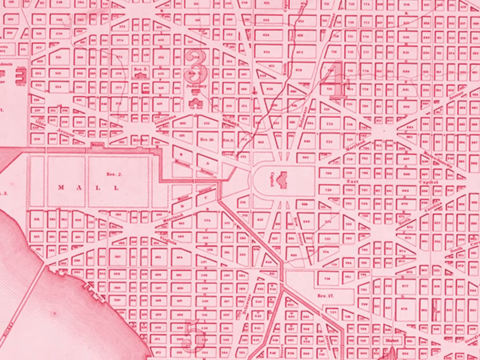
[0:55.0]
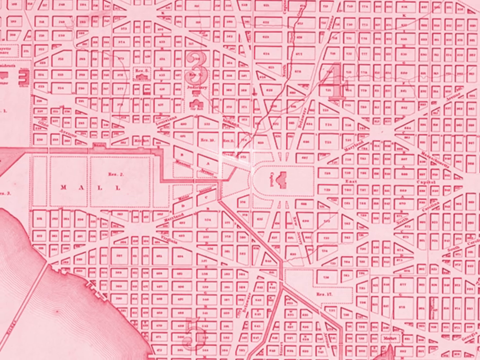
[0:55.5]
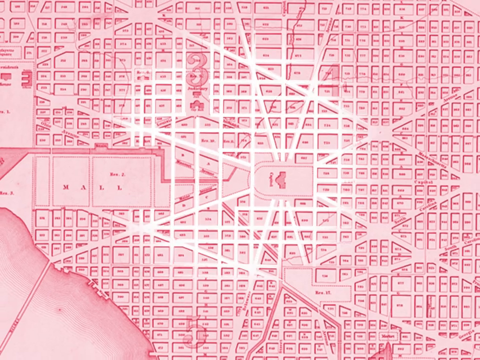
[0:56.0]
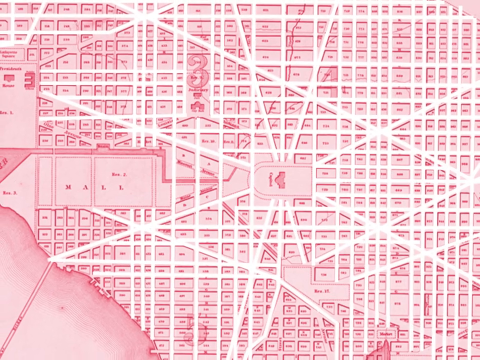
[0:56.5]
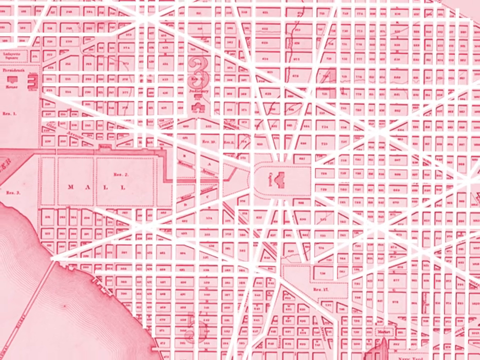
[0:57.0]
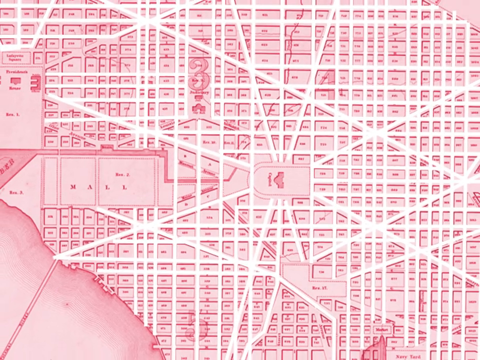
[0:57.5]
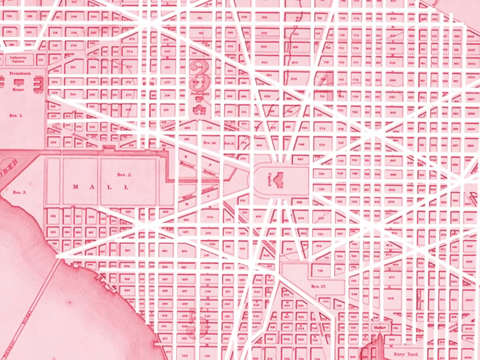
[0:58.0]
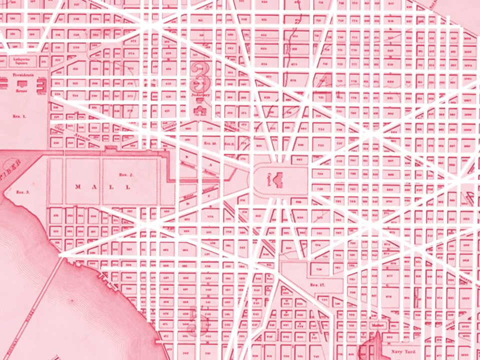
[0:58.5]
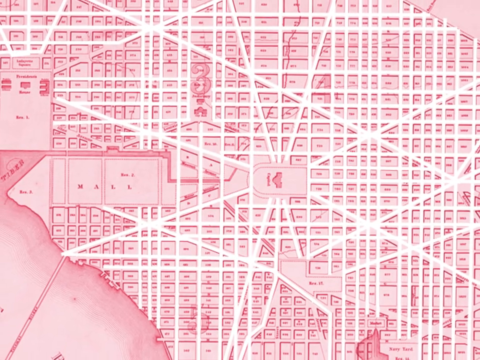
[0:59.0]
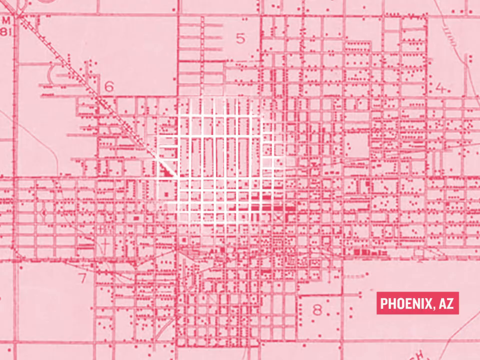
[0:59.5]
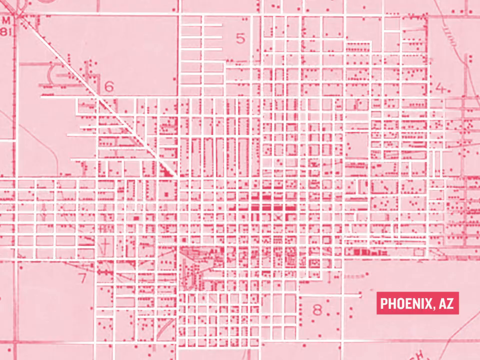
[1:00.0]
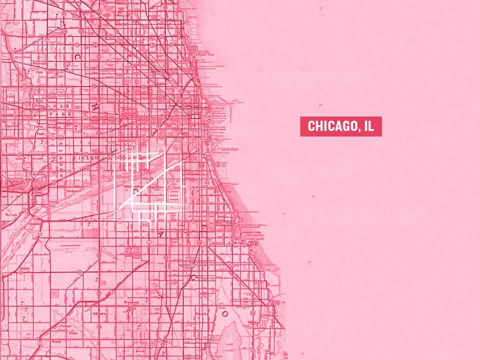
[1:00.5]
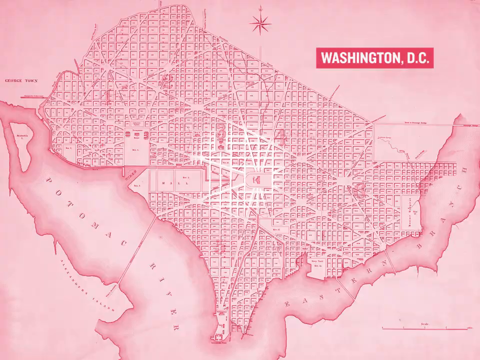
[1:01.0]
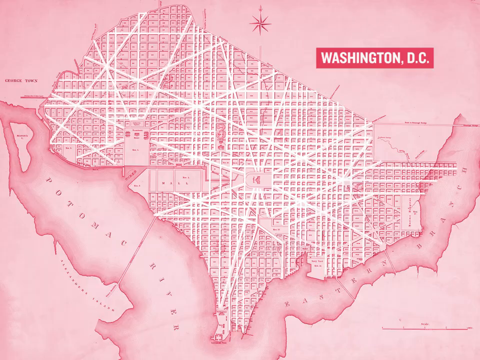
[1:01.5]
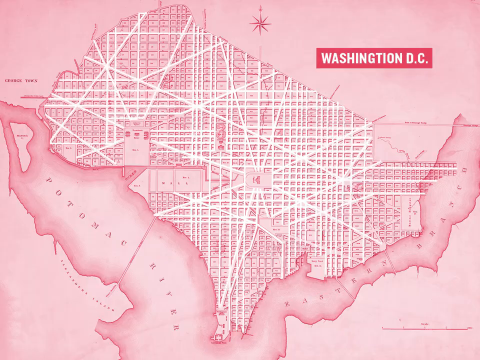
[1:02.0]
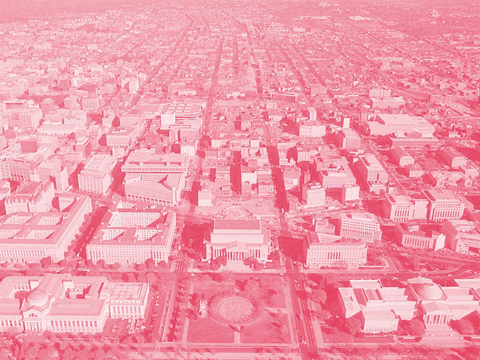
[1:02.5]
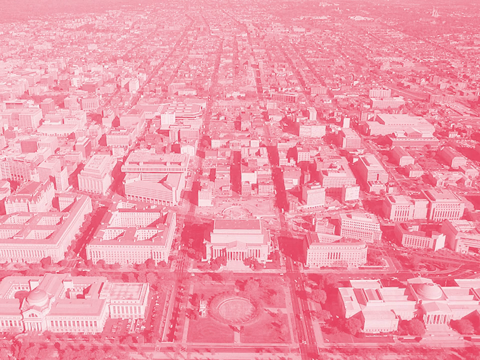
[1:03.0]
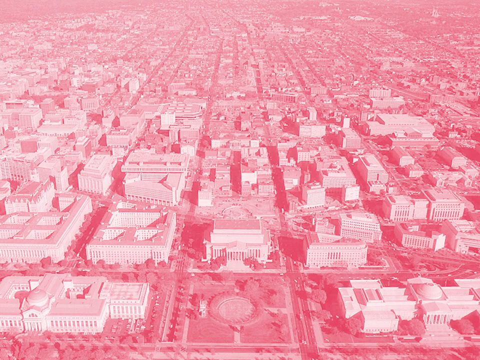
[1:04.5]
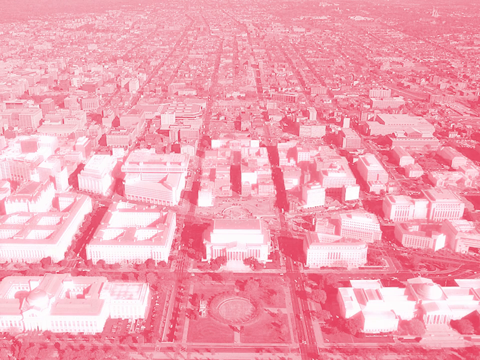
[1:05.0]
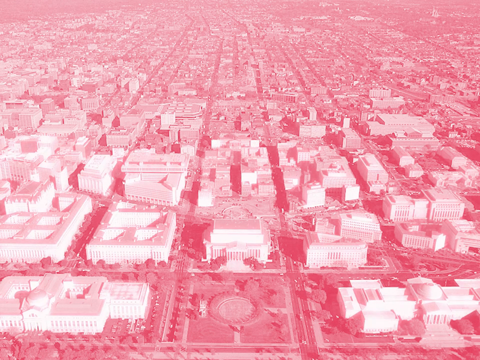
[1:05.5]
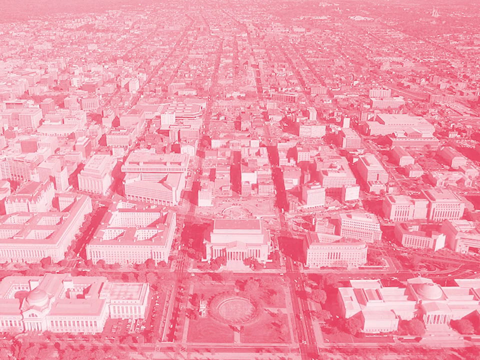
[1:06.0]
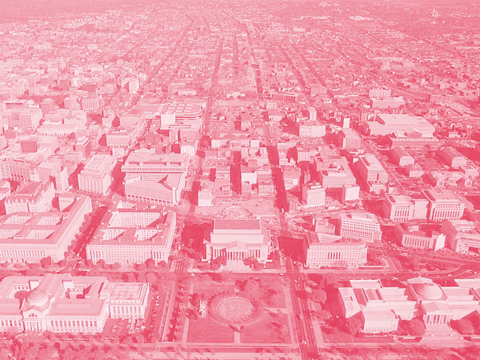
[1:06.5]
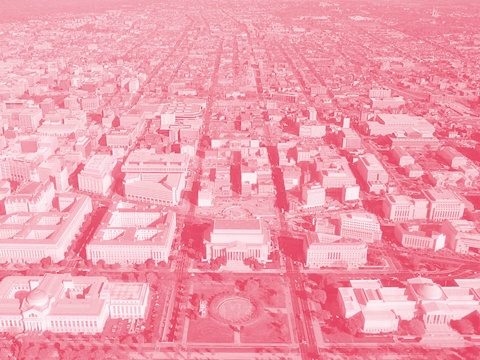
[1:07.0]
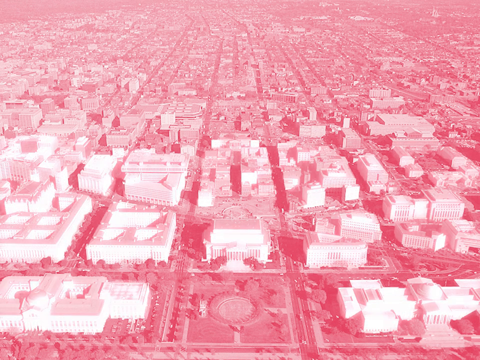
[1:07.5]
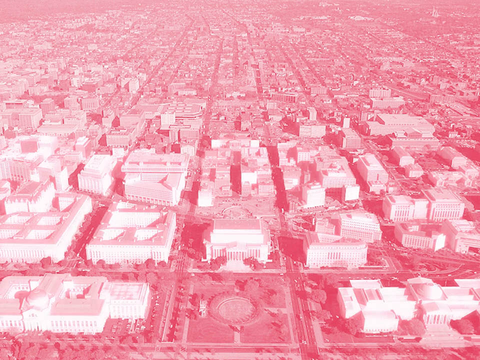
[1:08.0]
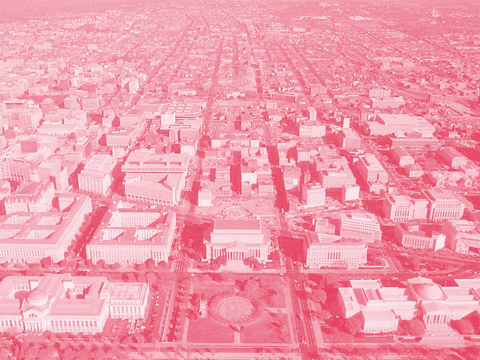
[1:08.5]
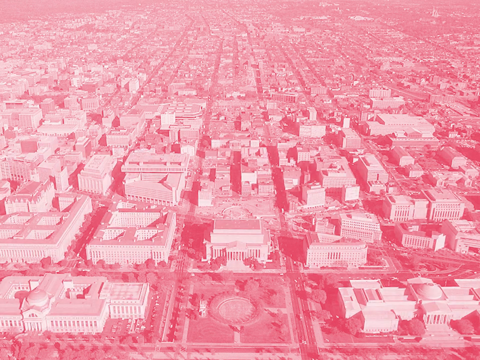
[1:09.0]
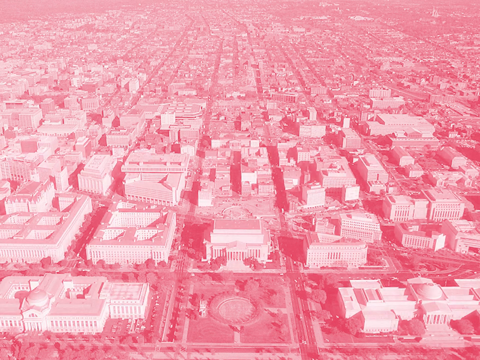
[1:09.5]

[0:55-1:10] The red map appears, and white lines appear across it. It seems to show buildings and the layout of major cities; in the corner of one scene the label "Washington DC" is visible, so it is presumably a map of the city center. The scene changes to what looks to be a bird's-eye view of Washington DC with a red effect over the camera, which holds for most of the shot. Besides Washington DC, maps of Chicago, Illinois and Phoenix, Arizona are shown. It is a little hard to tell what the maps cover, but they look like aerial views of the cities, with buildings labeled "mall" and river systems visible.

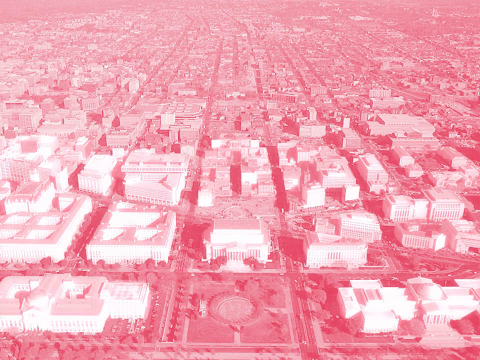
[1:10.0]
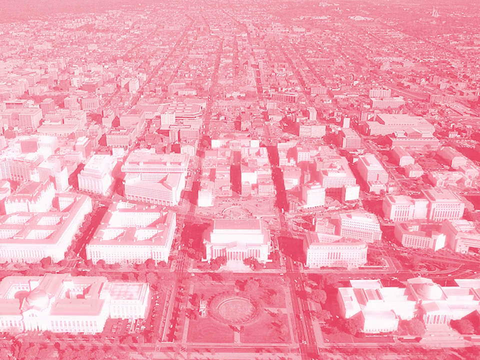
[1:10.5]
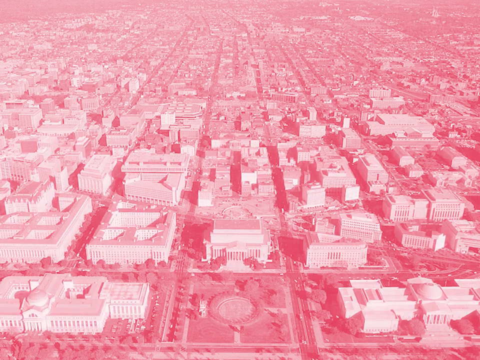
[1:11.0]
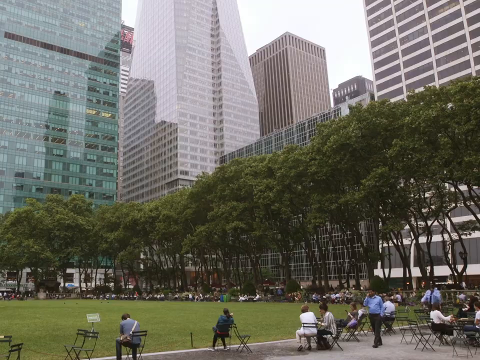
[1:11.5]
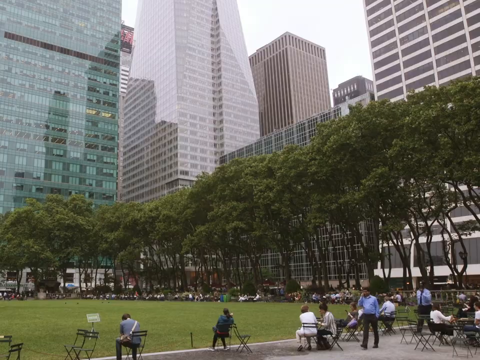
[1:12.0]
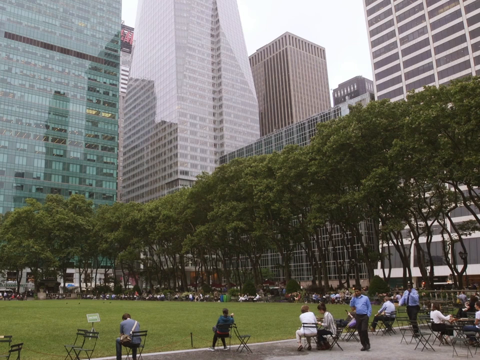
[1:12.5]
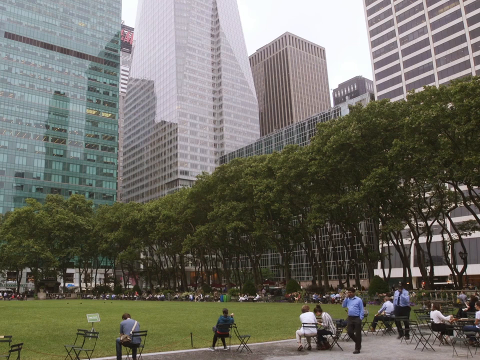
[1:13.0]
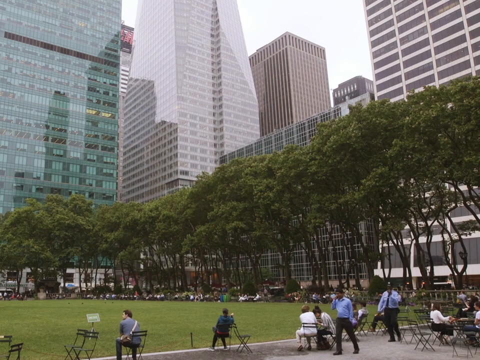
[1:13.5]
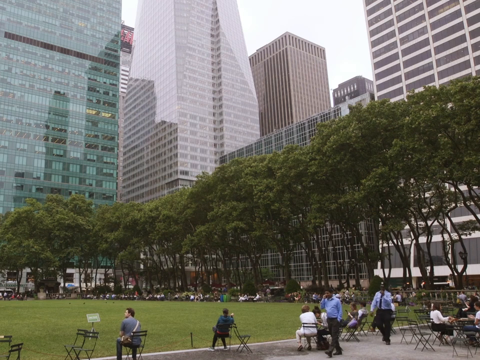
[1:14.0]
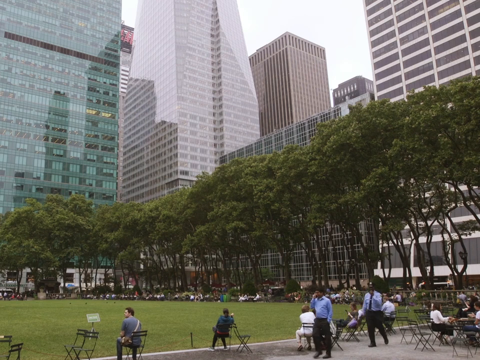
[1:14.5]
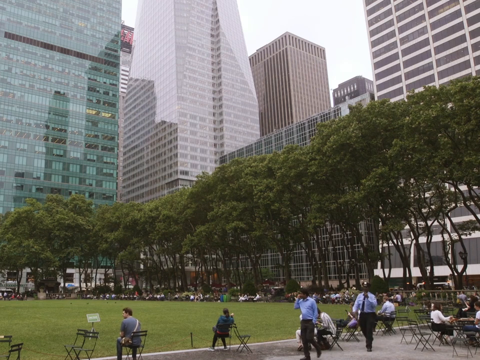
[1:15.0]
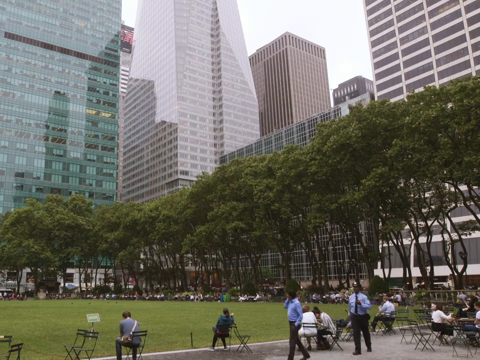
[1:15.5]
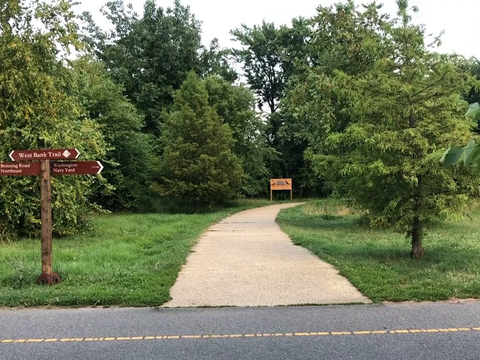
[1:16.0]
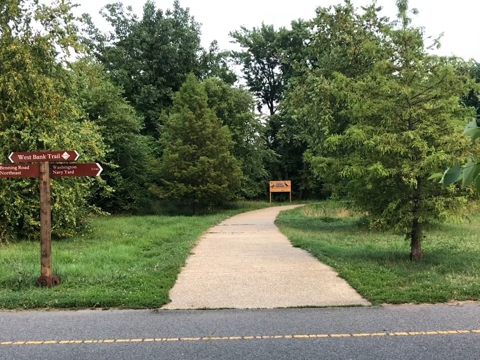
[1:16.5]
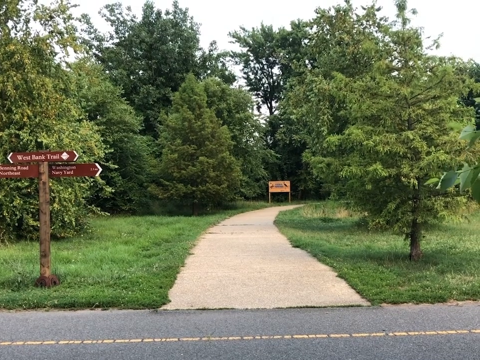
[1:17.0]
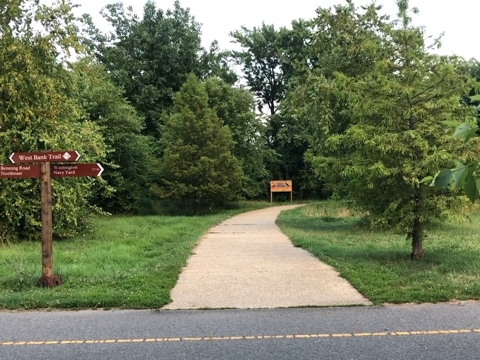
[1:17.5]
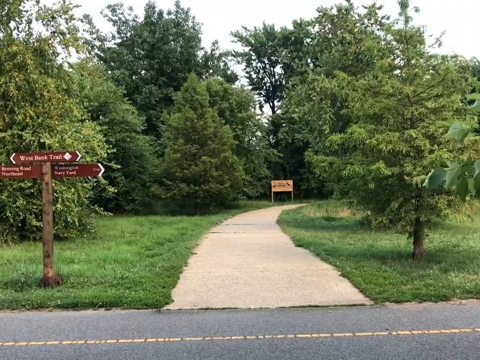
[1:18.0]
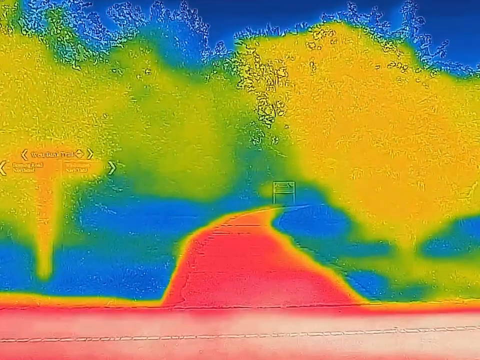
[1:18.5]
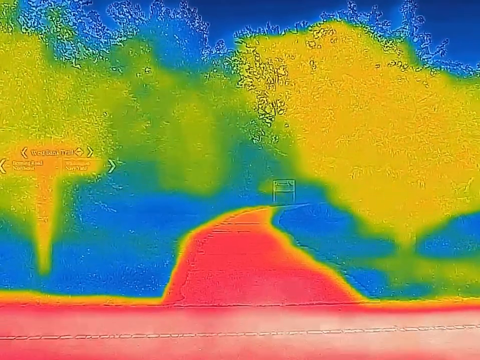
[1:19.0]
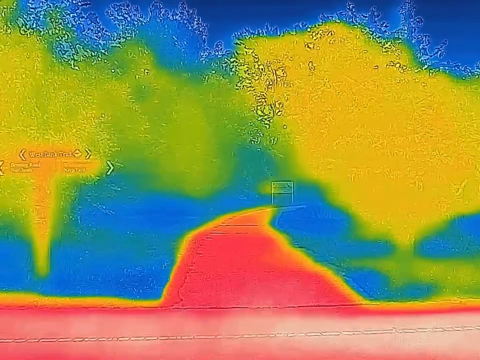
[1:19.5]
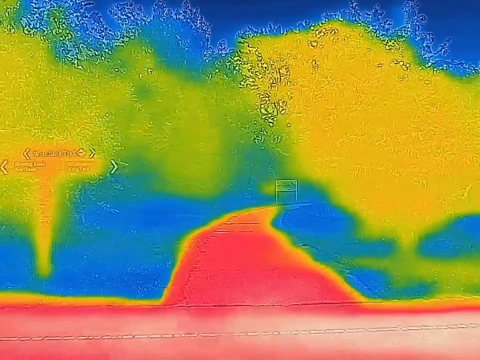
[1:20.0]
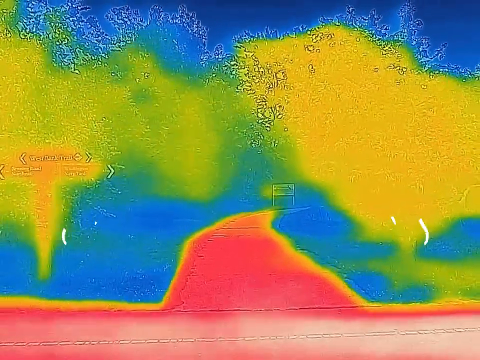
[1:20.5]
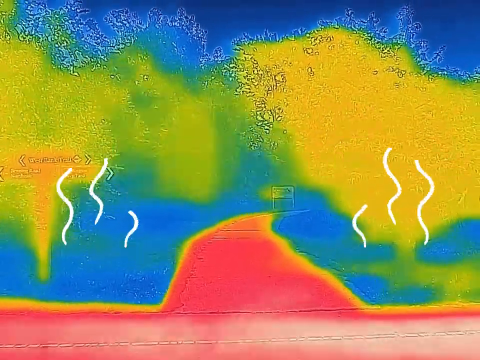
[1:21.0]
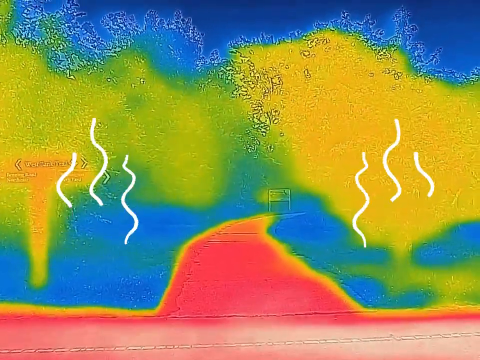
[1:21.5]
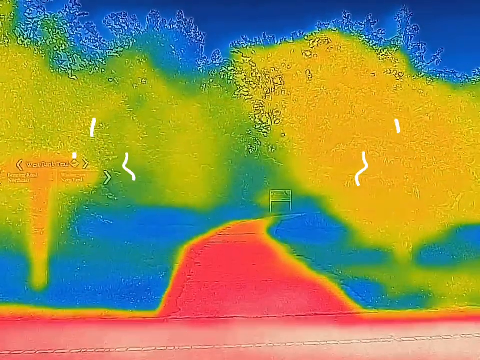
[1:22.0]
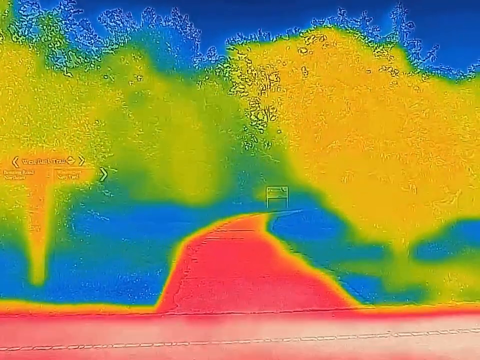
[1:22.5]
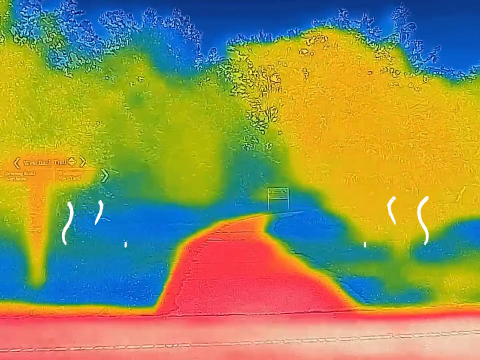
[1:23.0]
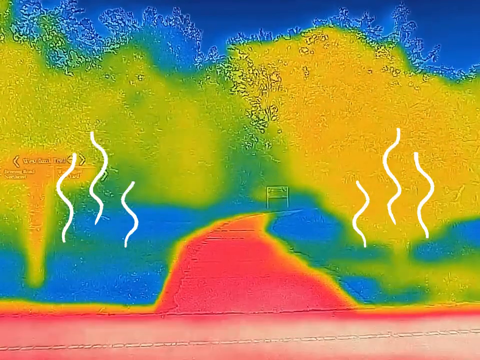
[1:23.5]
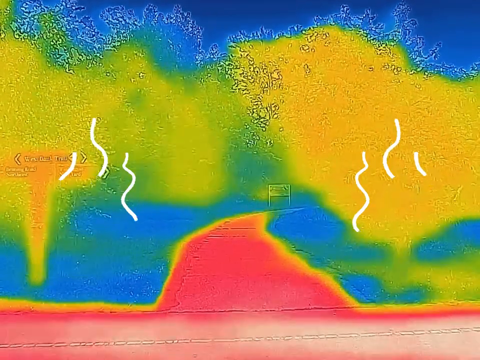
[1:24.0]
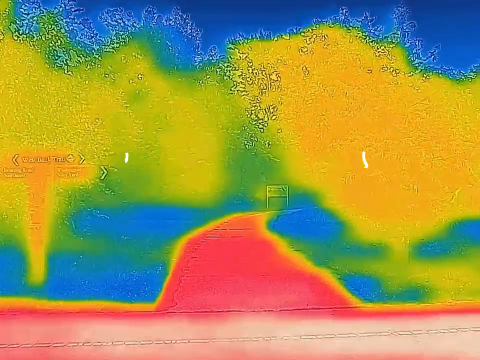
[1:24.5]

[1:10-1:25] The aerial view of Washington DC with the red effect over it switches to a normal view, with no effect, of a small park. There are a lot of trees around the park, people sitting in chairs outside the grassy area, and tall buildings behind the park: a blue one, a grey one and some tan ones, with a lot of windows. A few people walk on the sidewalk in the park, but none are on the grass. The scene changes to a park trail with a small sign that says "West Bank Trail" and a few trees. The heat map effect is applied to this scene, and heat waves are drawn onto the image, probably to indicate how hot the asphalt road in the park is and how it raises the temperature for visitors.